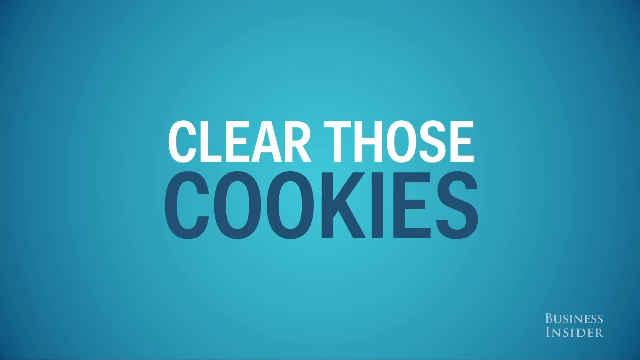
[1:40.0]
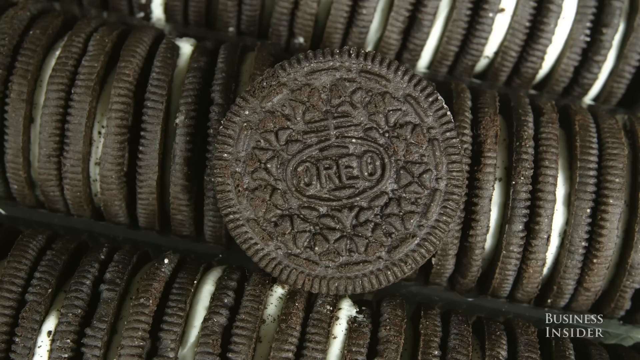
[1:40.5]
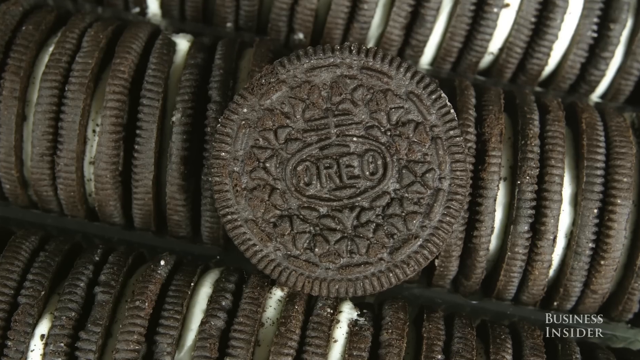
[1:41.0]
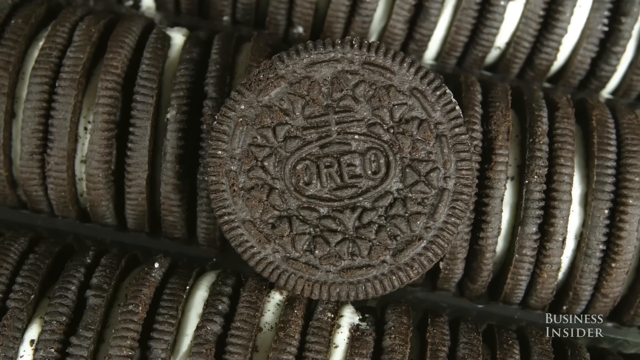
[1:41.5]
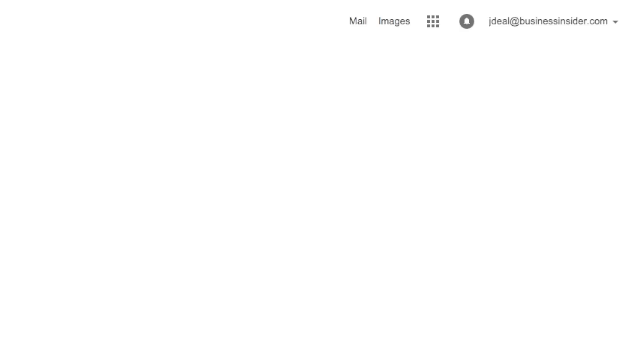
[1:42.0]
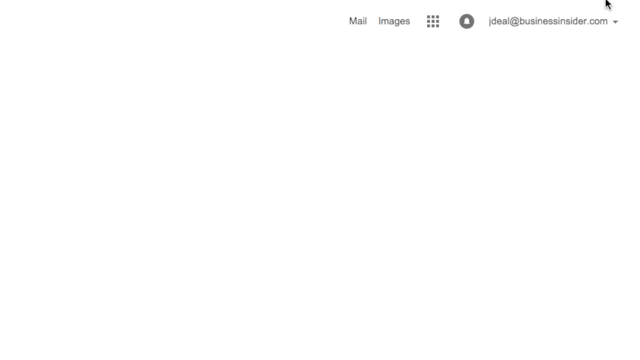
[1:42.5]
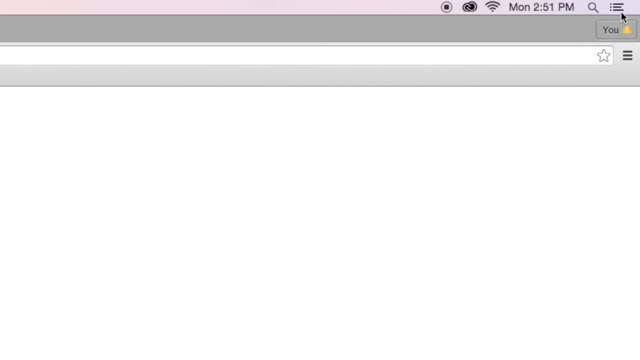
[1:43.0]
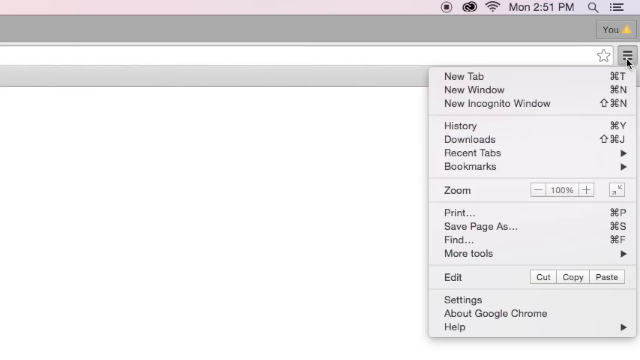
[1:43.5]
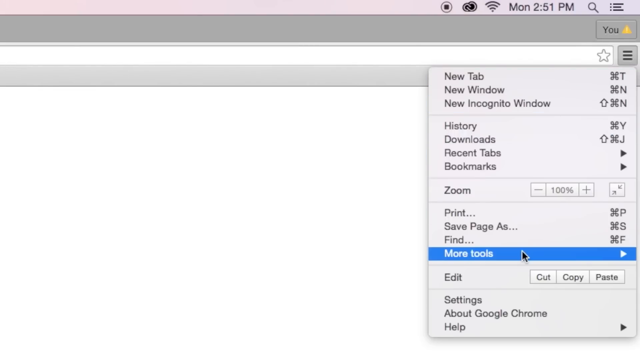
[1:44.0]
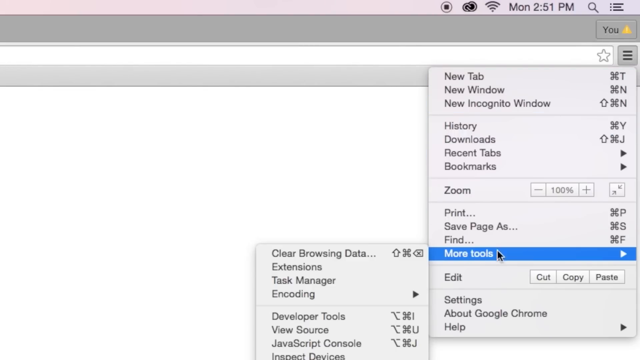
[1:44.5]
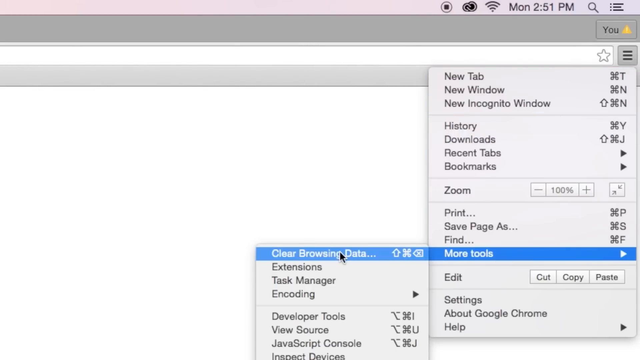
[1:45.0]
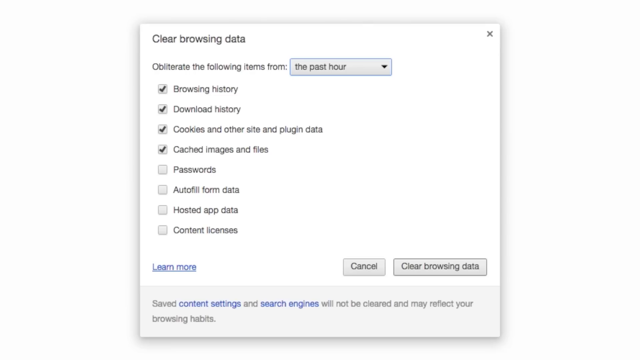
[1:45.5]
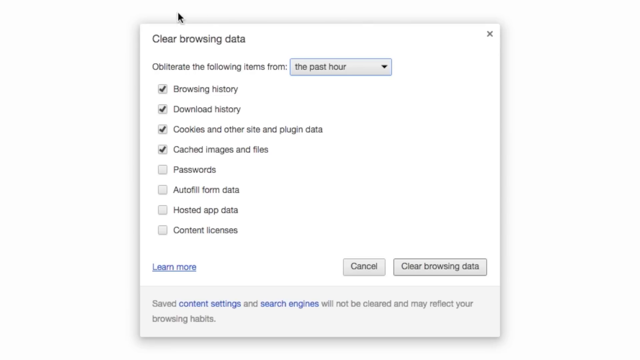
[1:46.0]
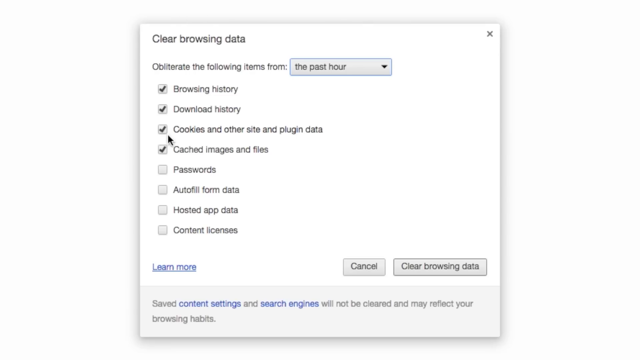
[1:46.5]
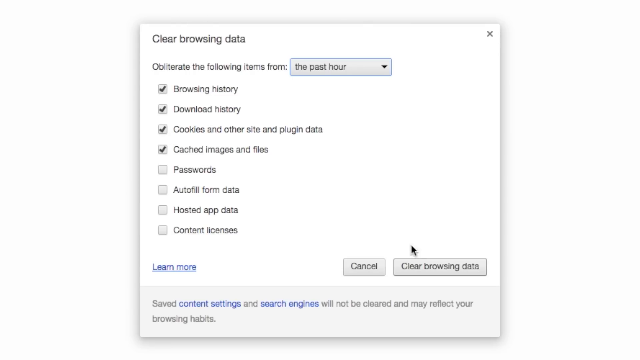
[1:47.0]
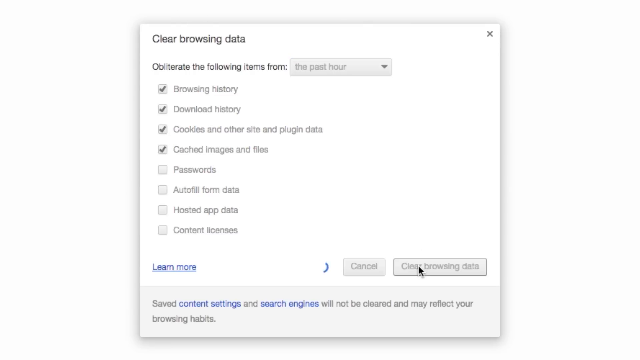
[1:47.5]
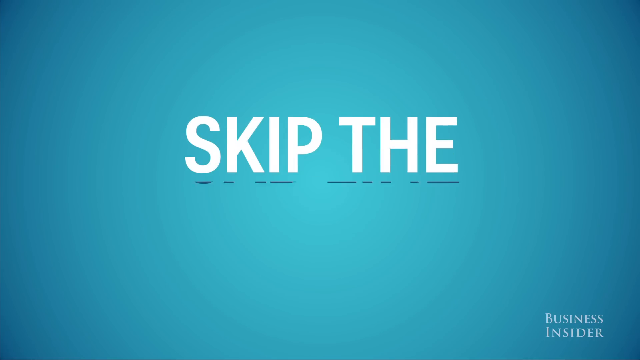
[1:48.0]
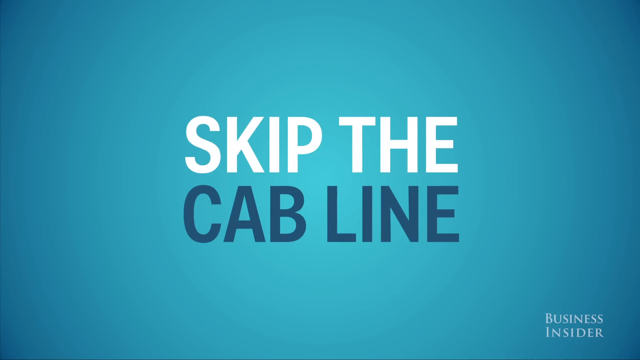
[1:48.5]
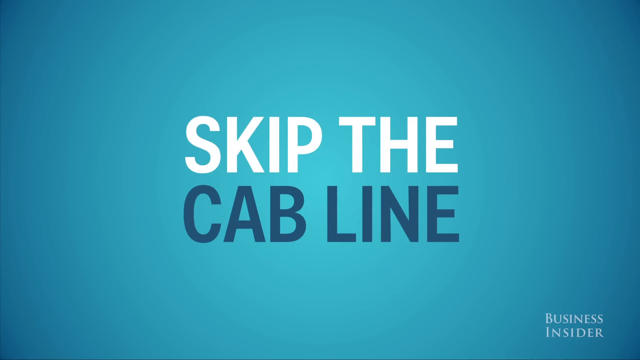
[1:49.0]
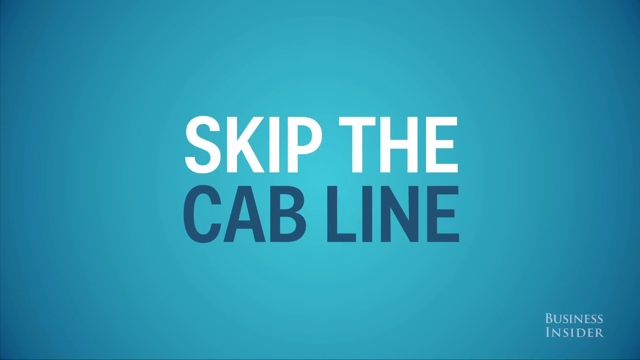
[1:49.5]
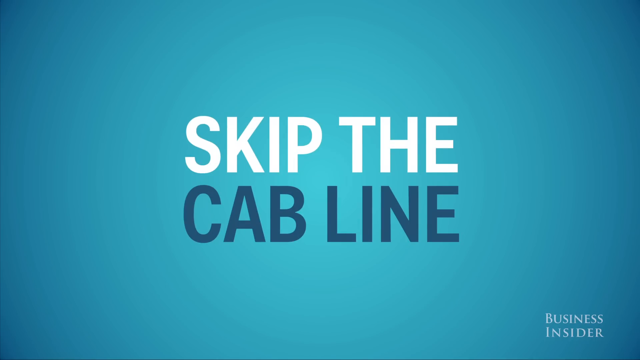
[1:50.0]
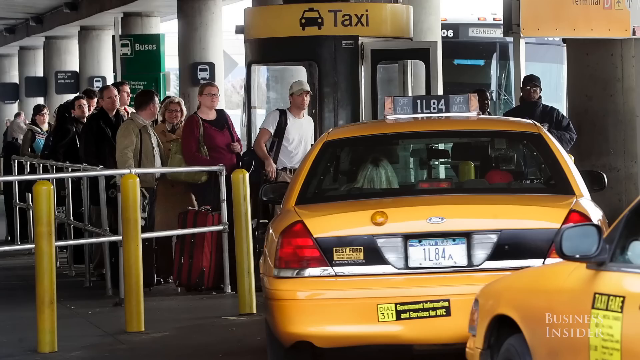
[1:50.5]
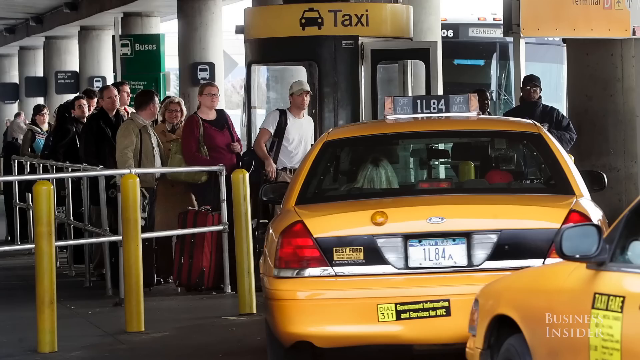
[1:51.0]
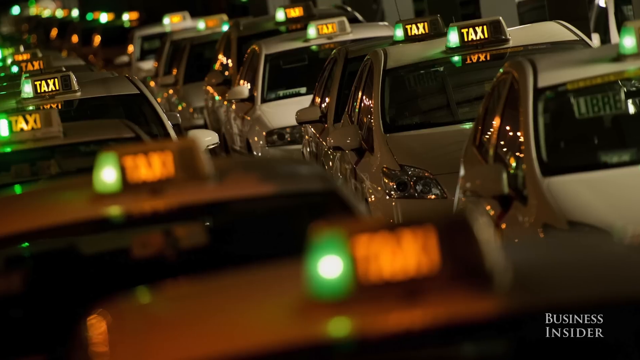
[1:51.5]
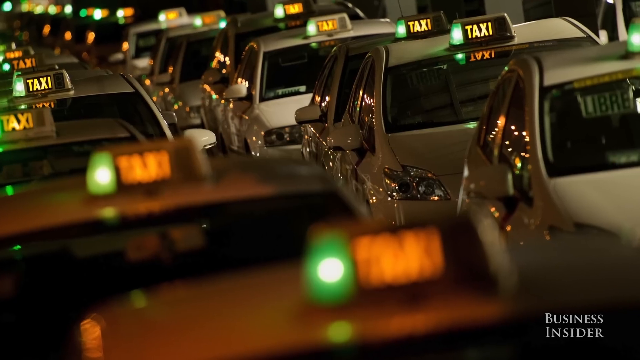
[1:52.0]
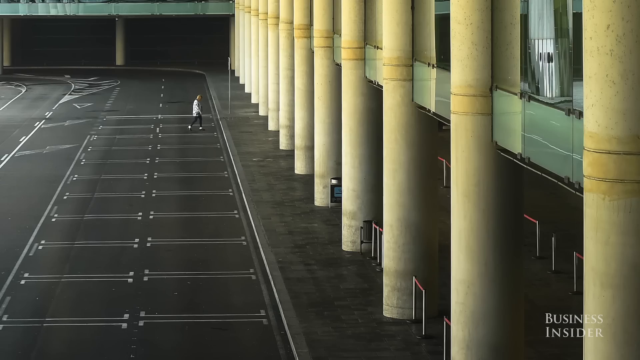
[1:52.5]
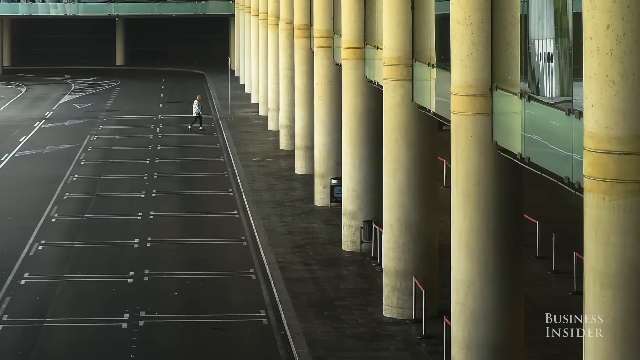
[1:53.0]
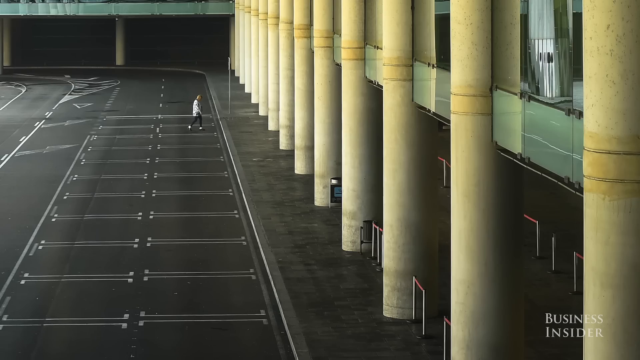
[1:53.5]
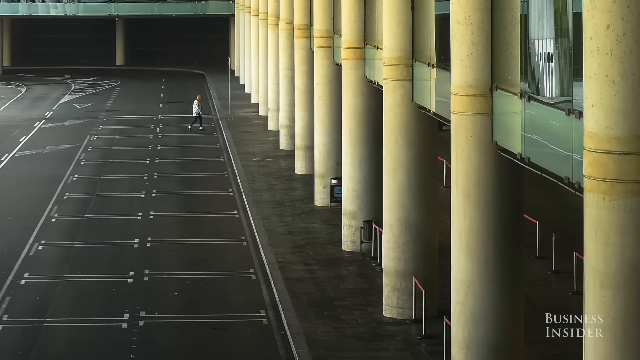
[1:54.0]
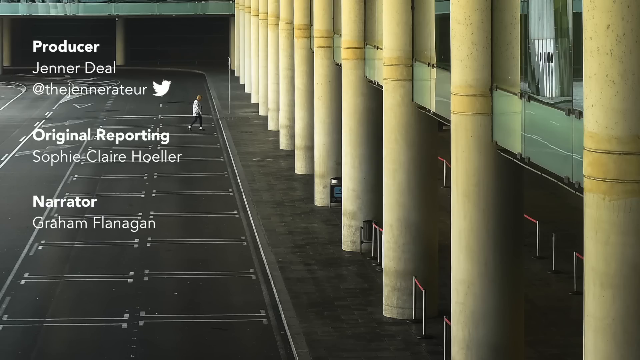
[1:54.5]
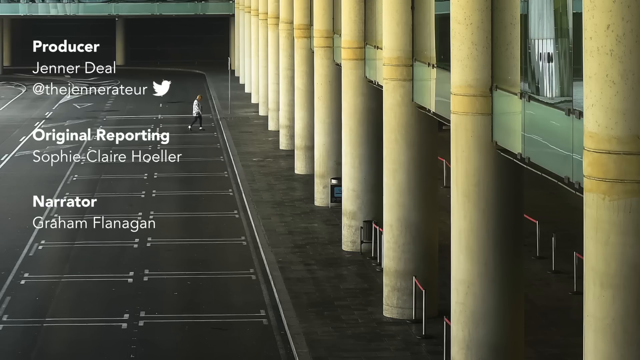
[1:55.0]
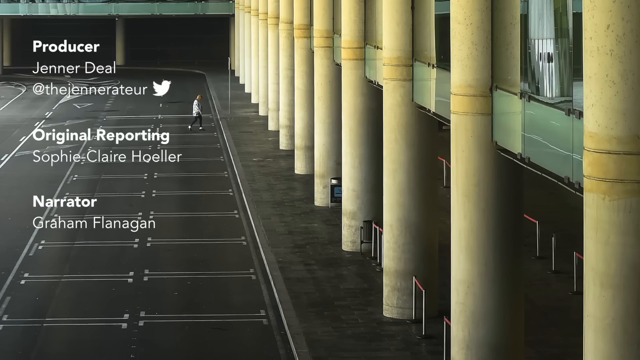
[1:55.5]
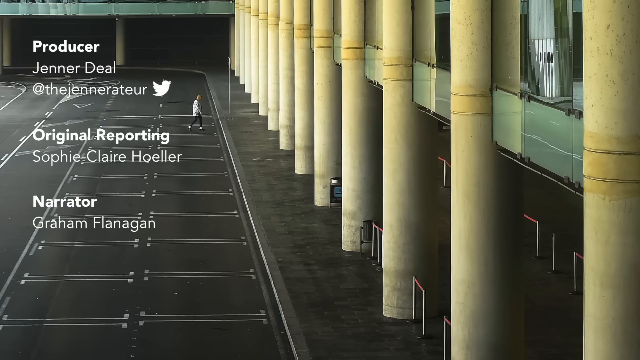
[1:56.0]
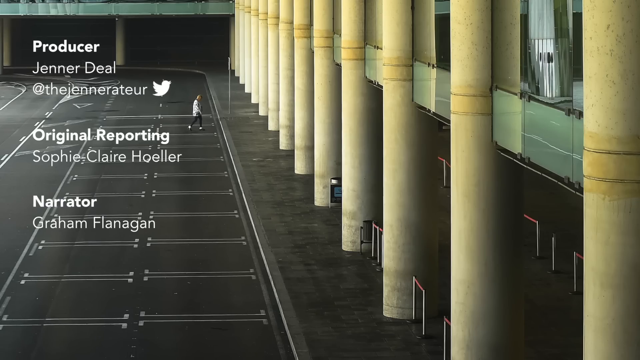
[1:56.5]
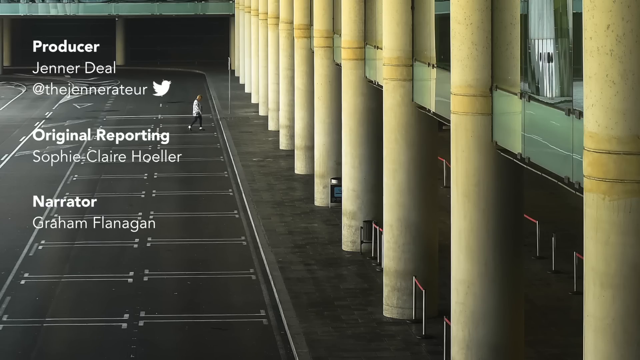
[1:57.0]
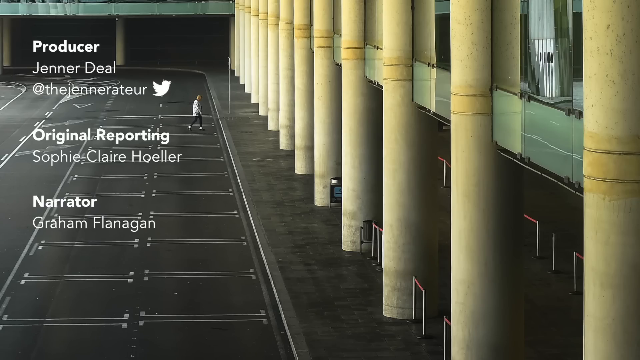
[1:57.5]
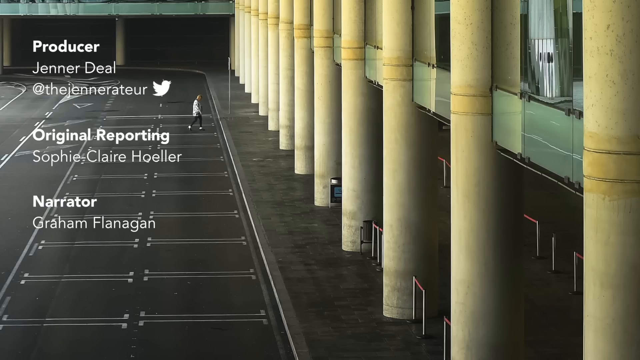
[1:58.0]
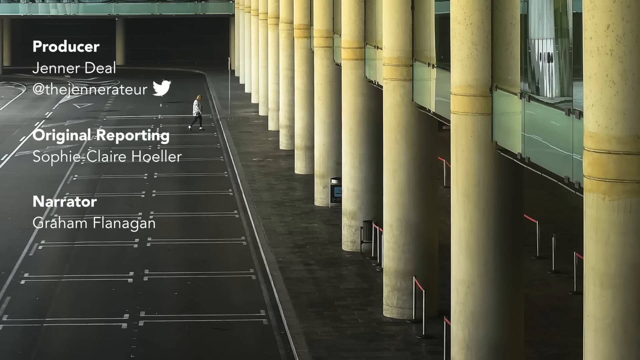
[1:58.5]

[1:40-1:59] Text reads "clear those cookies" over a tray of Oreo cookies with mini Oreo cookies. A drop-down menu on a computer shows "more tools," "clear browsing data," "cookies and other," "zoom," "new tab," "new window," "browsing history," "password" and "auto-fill form data." Text reads "skip the cab line." A cab line with mini cabs appears, about 20 cabs in a line, and people stand in a cab queue. A person walks across an airport traffic lane and the airport parking lot. "Producer Jennifer Deal" and "business insider" appear. There are yellow cabs, white cabs and more yellow cabs, columns and steel barrier protectors. "Skip the line" appears with a cab line queue.